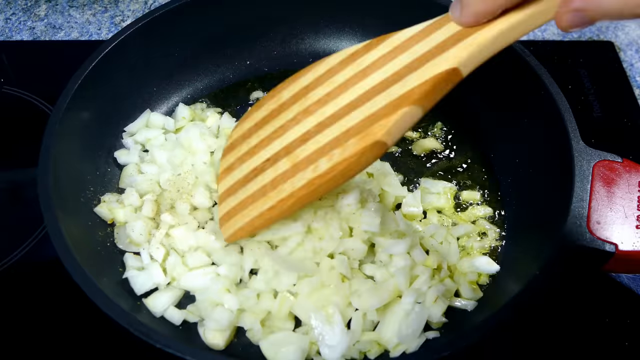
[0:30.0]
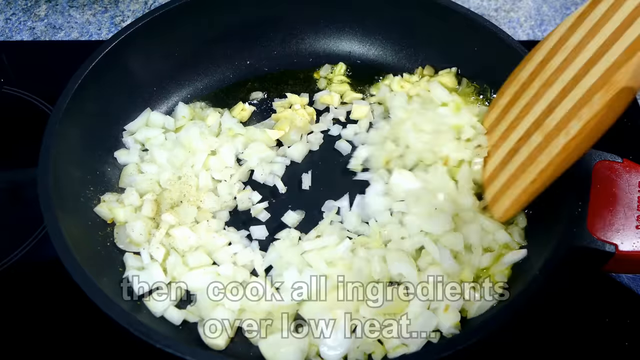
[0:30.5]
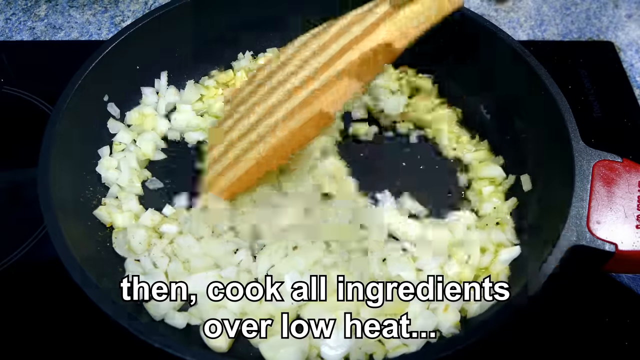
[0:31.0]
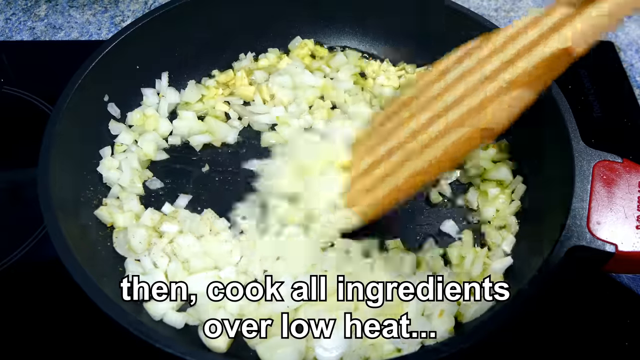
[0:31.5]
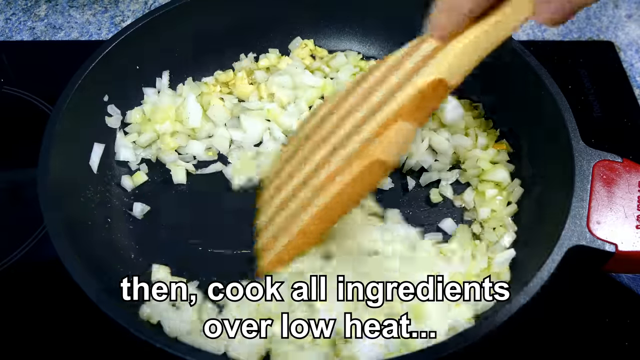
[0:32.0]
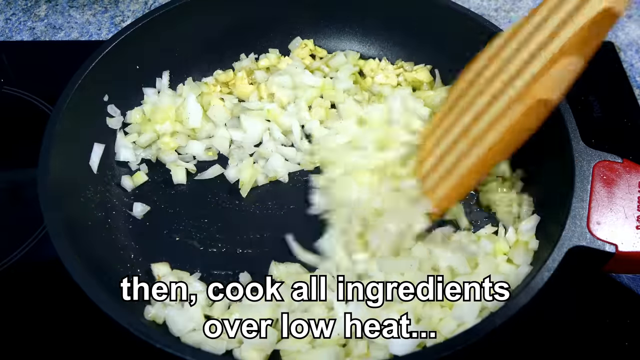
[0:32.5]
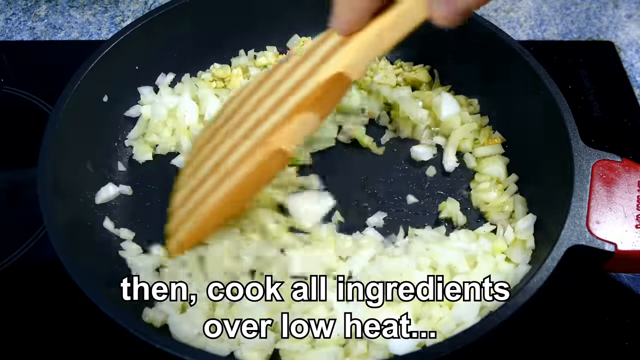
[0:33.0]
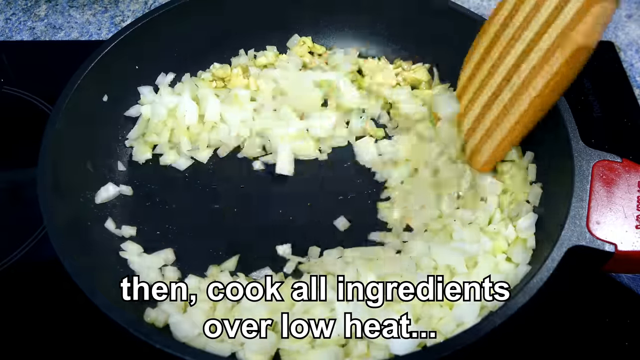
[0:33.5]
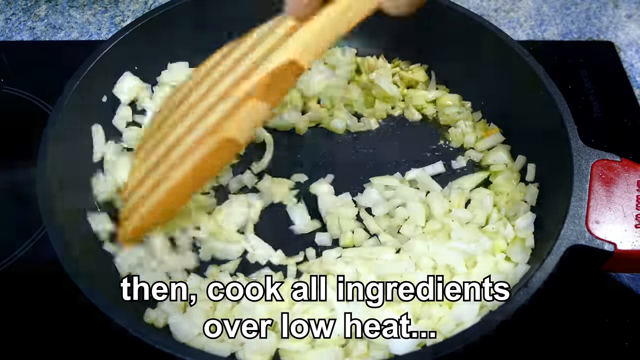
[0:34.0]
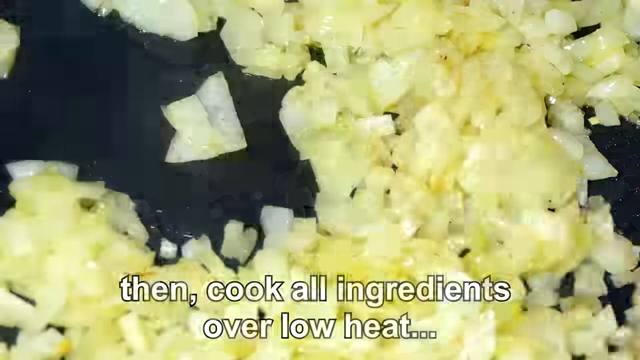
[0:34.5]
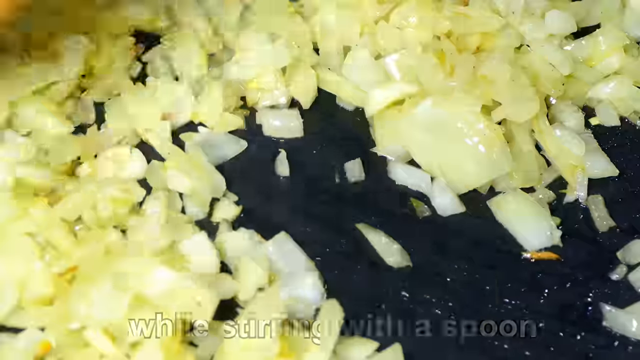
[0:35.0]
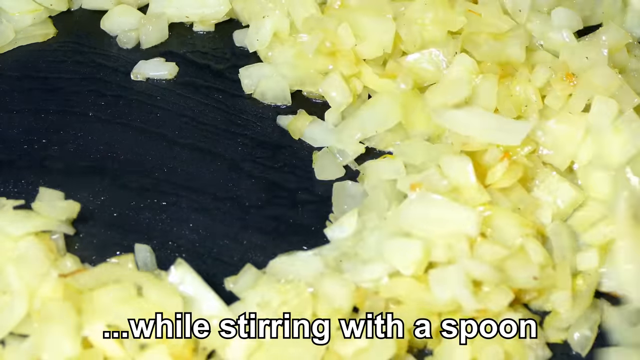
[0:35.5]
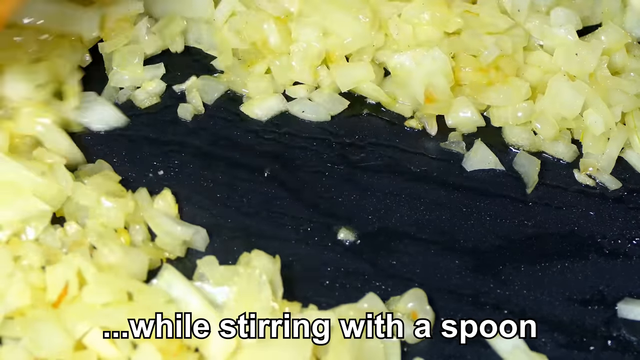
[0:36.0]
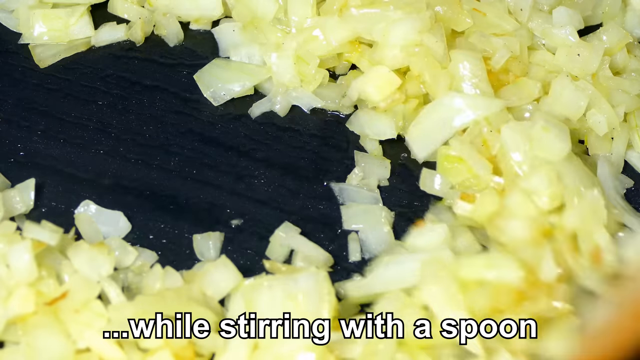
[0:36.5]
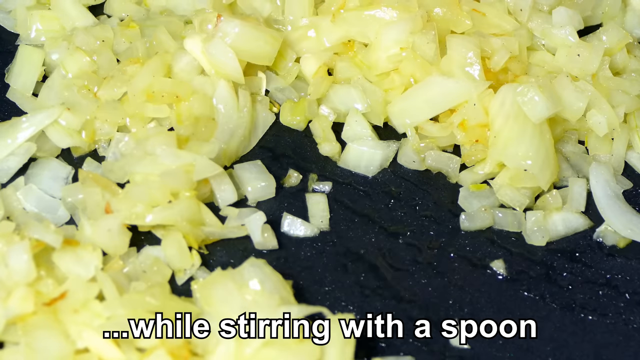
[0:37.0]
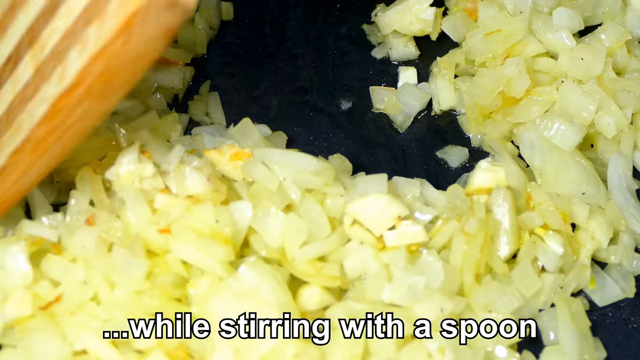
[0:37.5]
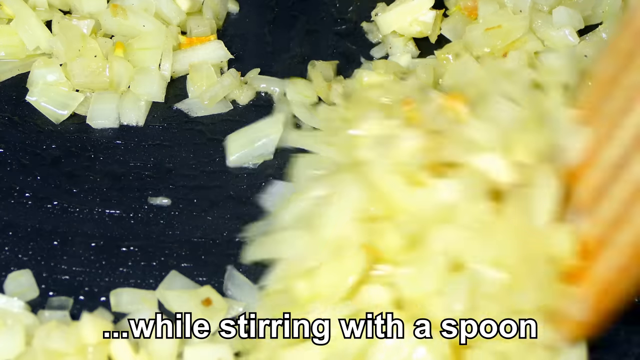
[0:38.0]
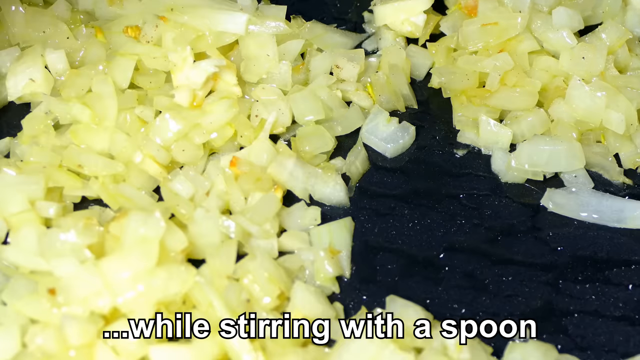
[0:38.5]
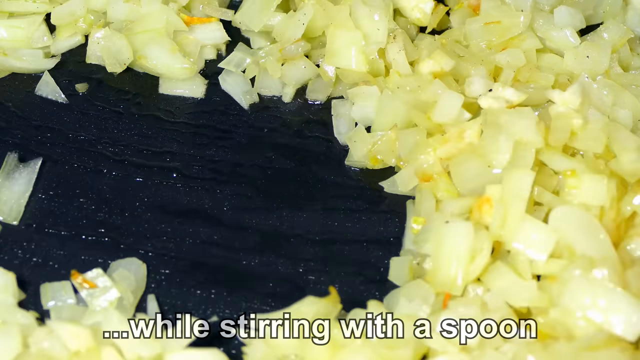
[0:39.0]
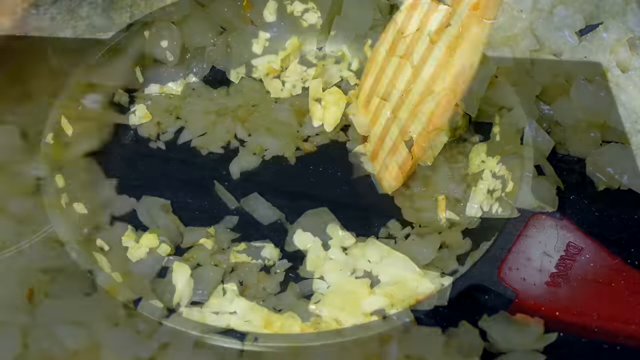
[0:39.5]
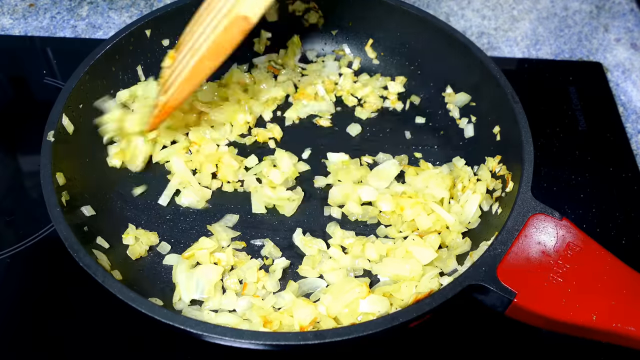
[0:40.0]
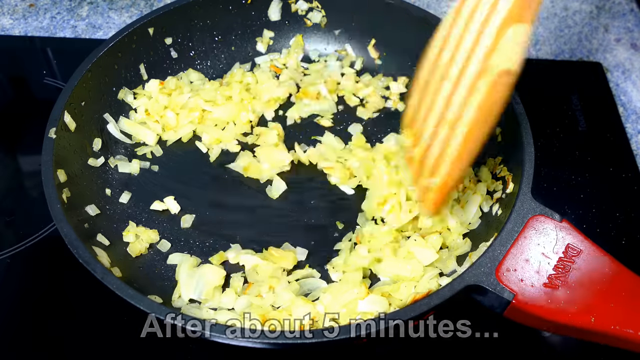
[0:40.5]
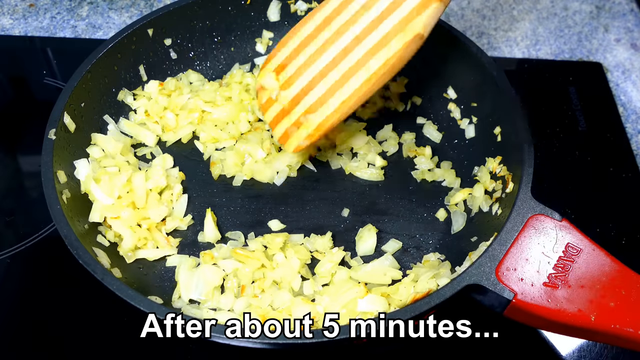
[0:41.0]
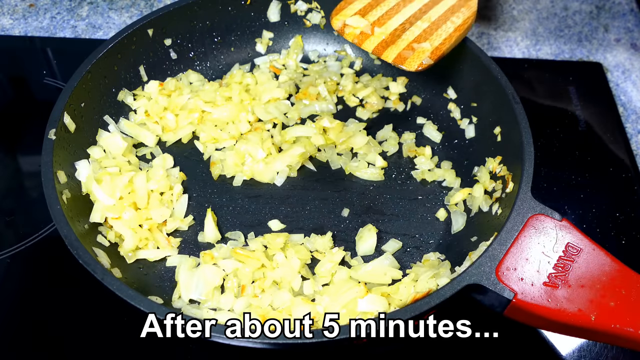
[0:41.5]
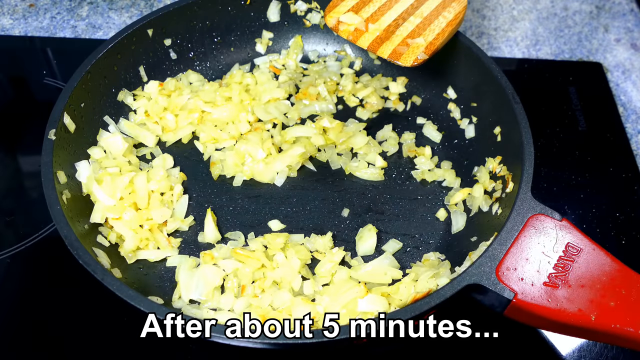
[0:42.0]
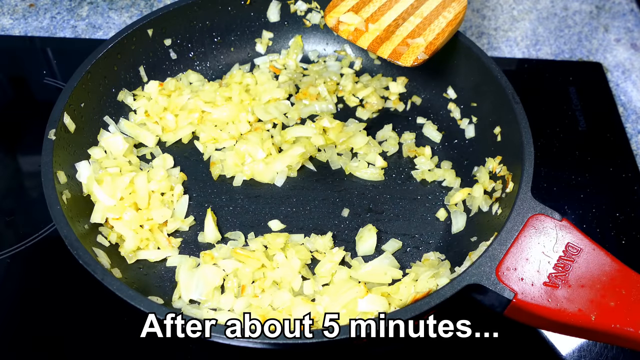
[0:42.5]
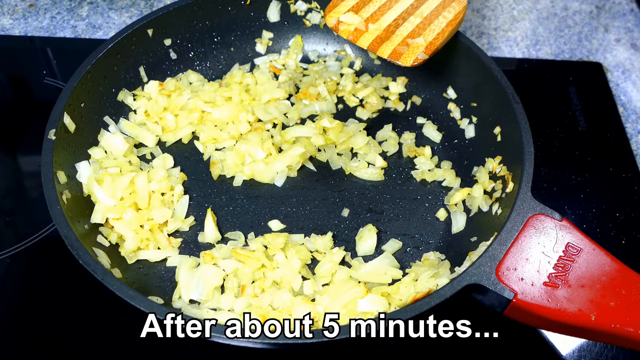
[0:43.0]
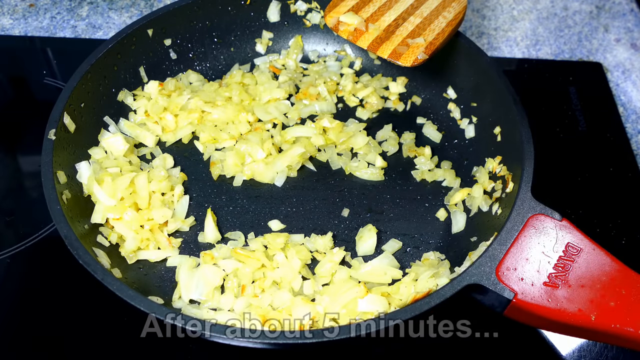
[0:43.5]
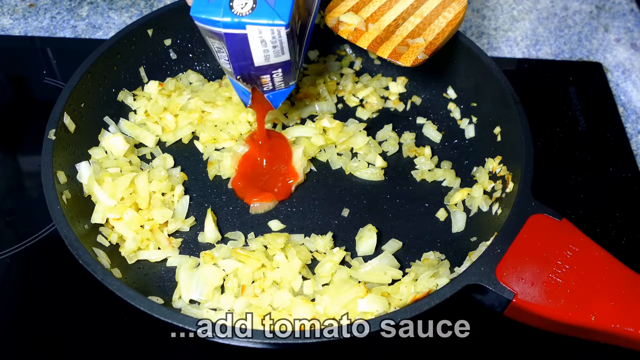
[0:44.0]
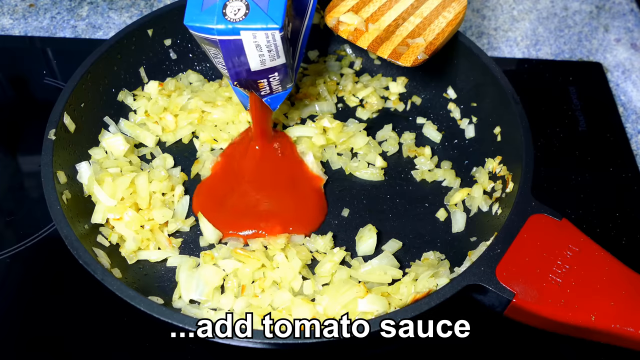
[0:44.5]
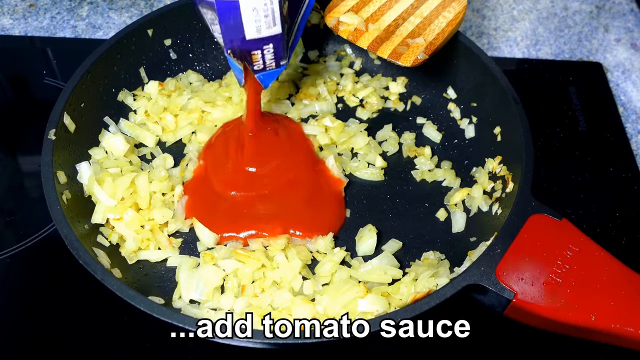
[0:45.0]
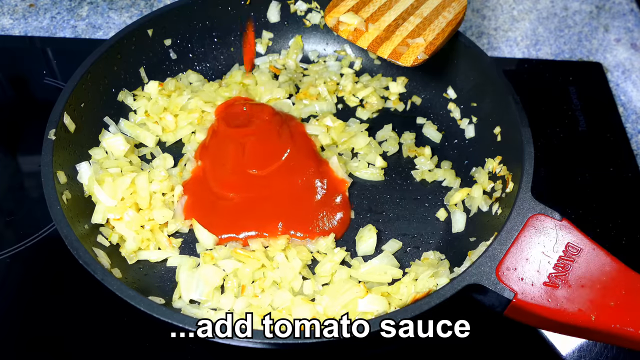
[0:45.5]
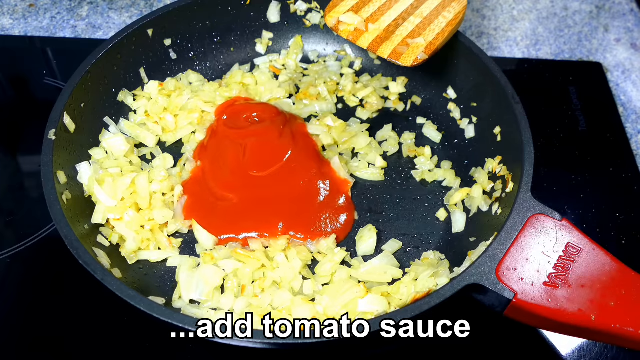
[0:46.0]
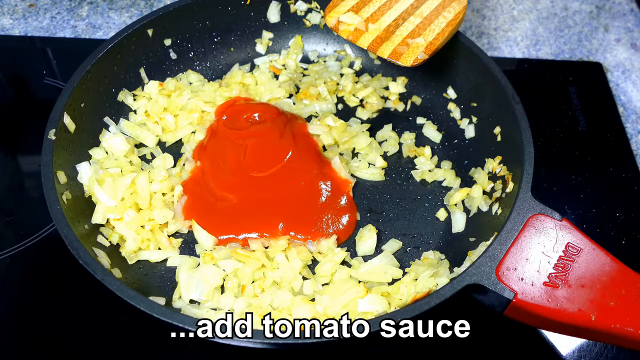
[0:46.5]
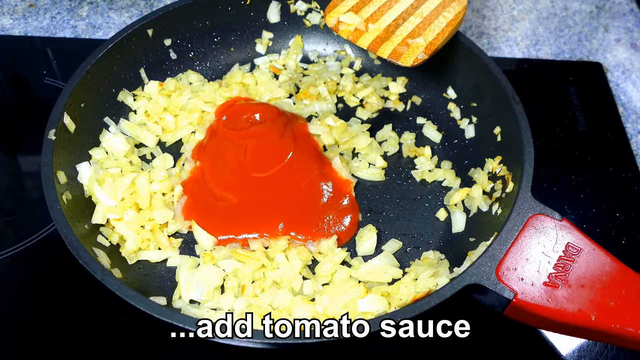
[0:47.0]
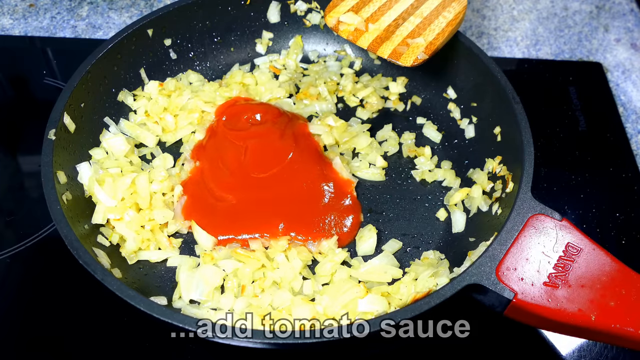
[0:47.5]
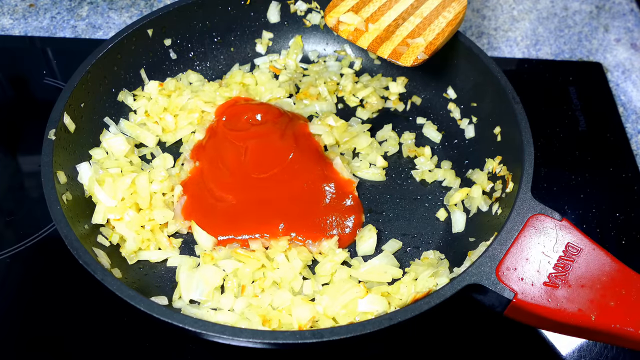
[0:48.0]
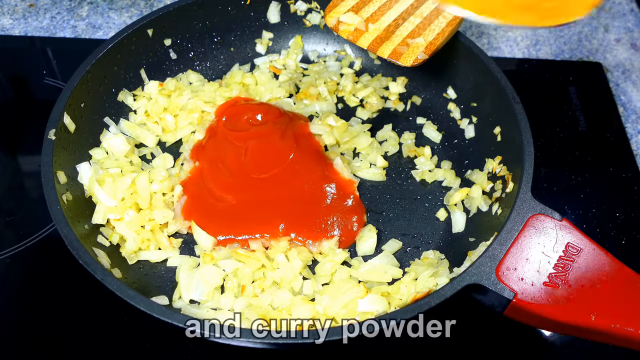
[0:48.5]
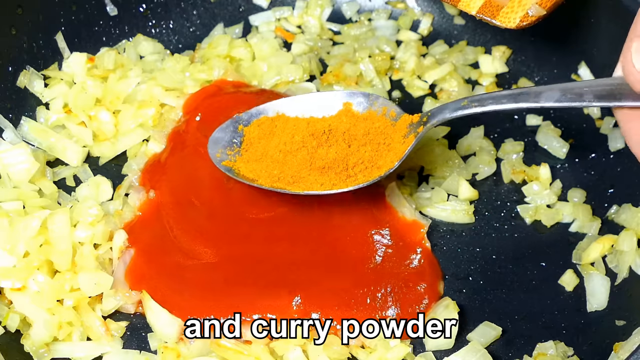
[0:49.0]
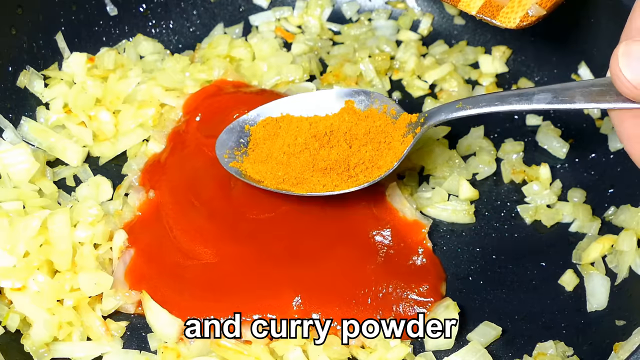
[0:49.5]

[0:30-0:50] The ingredients are being stirred. Text says "cook all the ingredients over low heat while stirring with a spoon," and the ingredients are stirred with a wooden spoon. After about five minutes, everything in the pan has turned a dark yellow color. Tomato sauce is then added into the middle of the pan, with curry powder added on top of the tomato sauce. The cooking is done on a stovetop in a black pan with a red handle on the right.